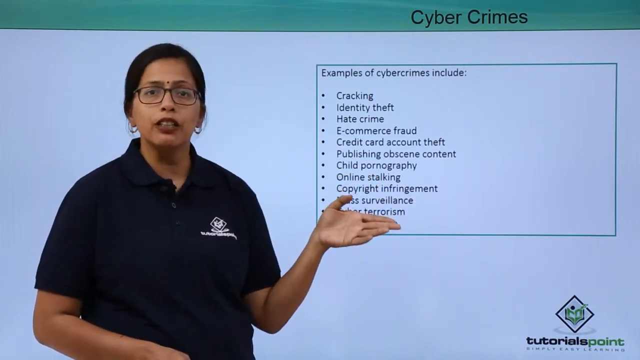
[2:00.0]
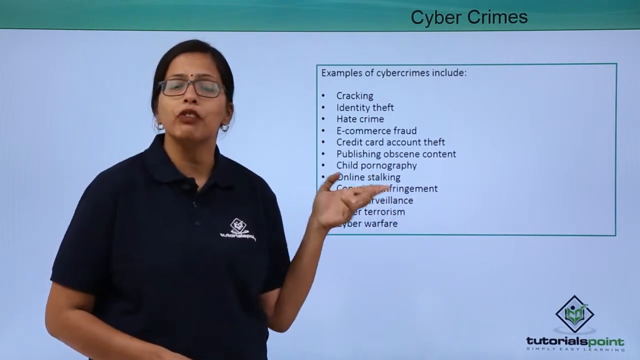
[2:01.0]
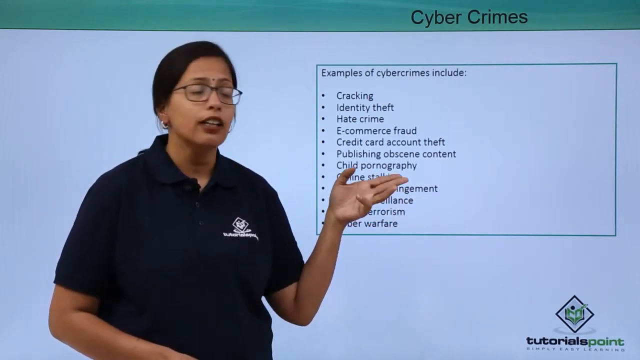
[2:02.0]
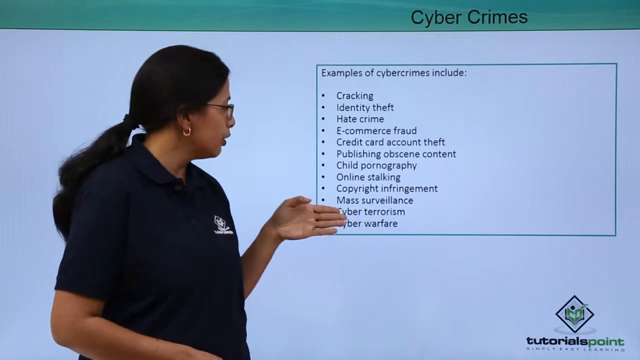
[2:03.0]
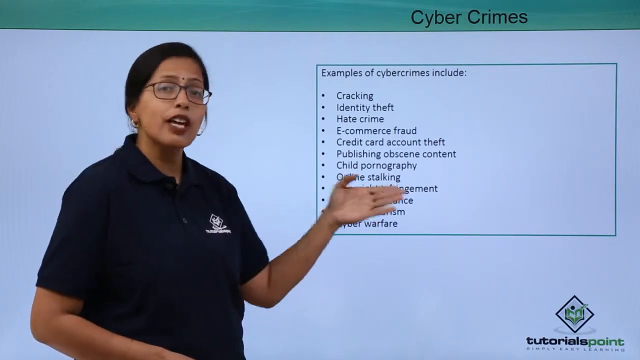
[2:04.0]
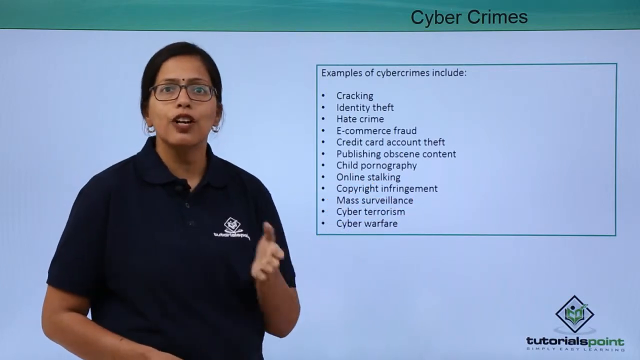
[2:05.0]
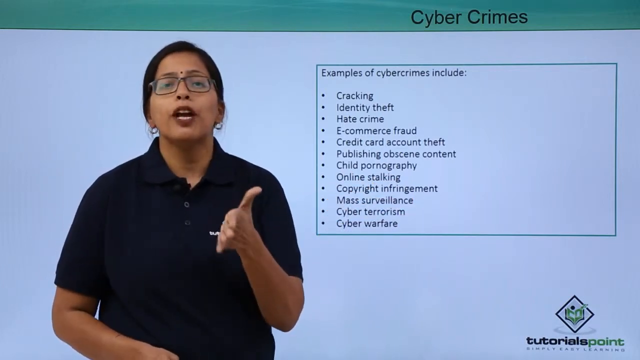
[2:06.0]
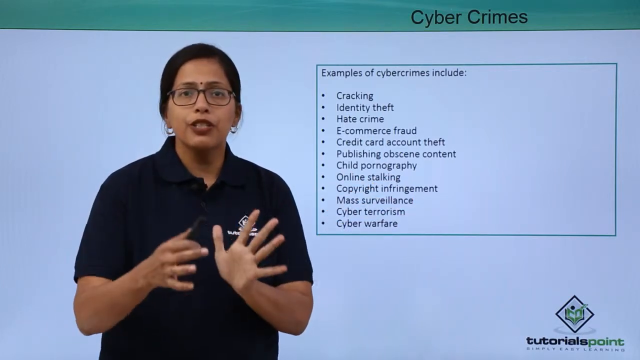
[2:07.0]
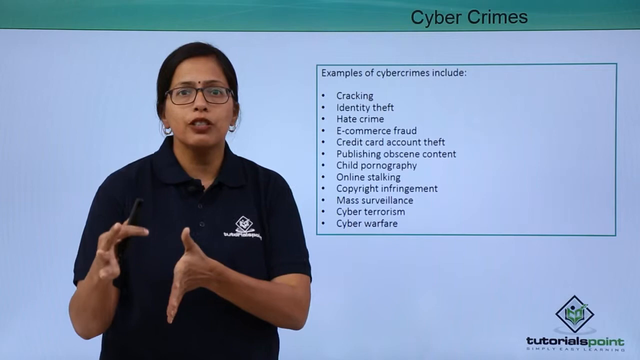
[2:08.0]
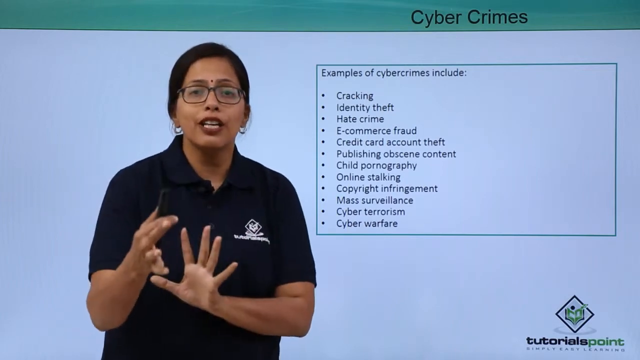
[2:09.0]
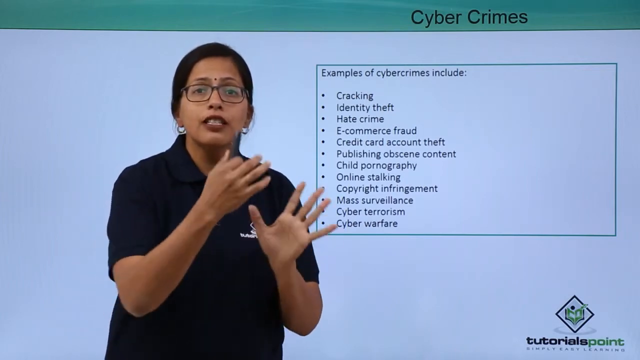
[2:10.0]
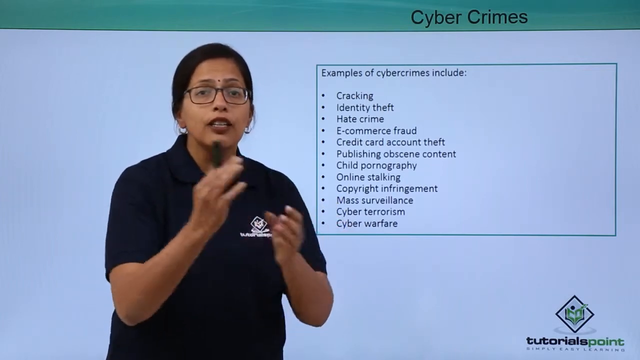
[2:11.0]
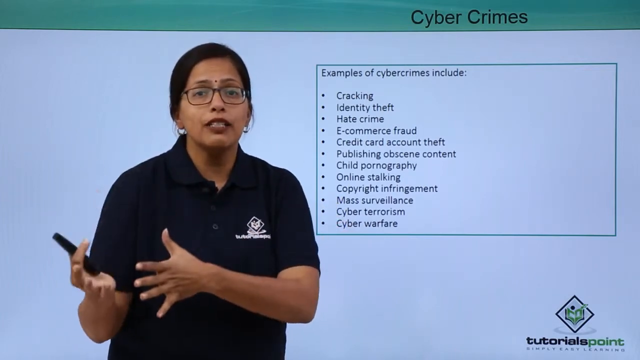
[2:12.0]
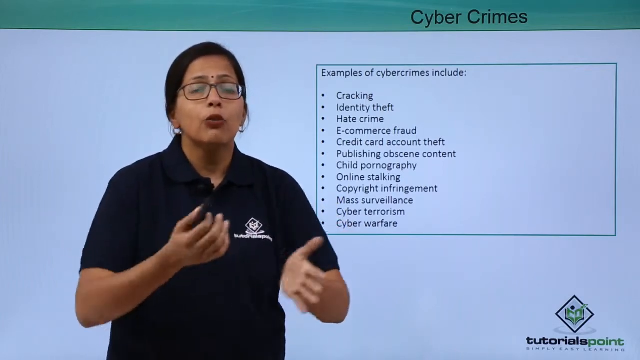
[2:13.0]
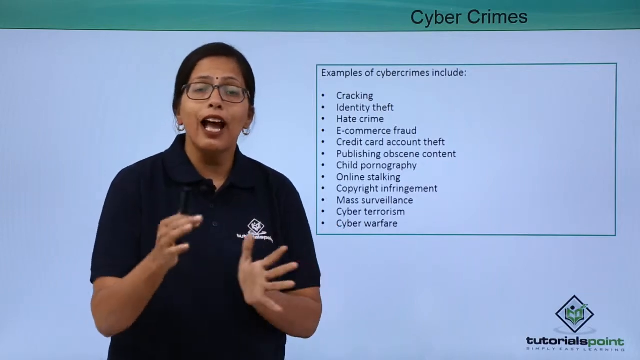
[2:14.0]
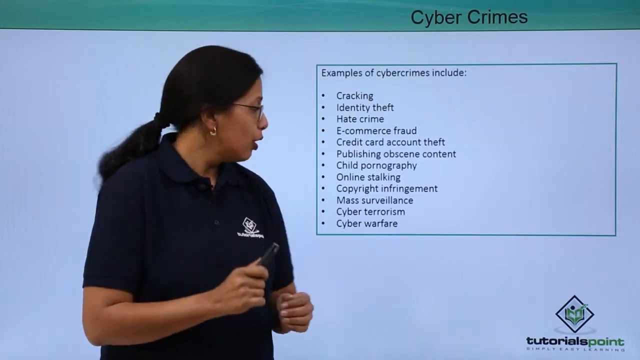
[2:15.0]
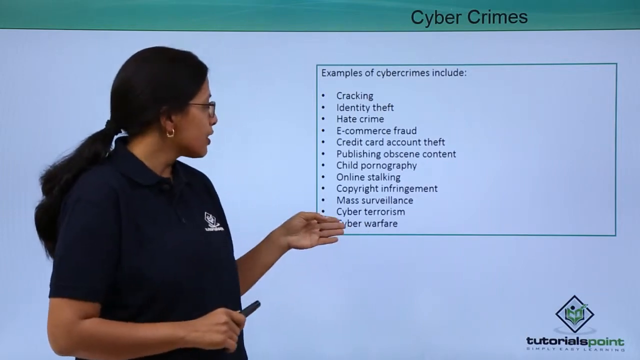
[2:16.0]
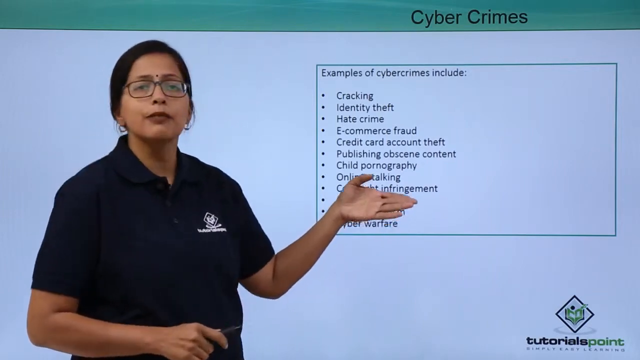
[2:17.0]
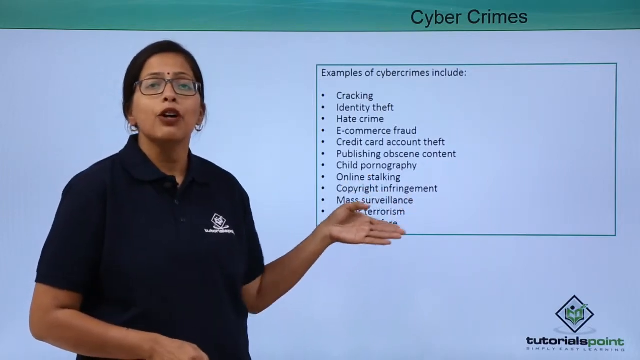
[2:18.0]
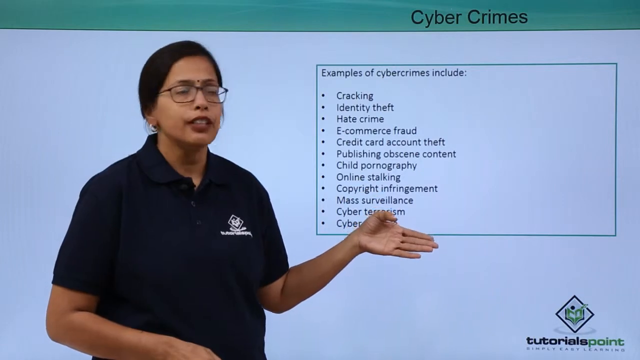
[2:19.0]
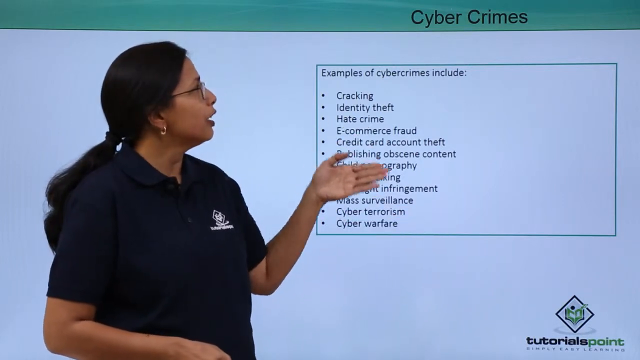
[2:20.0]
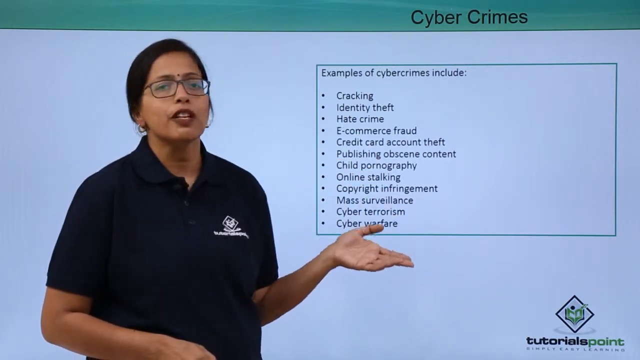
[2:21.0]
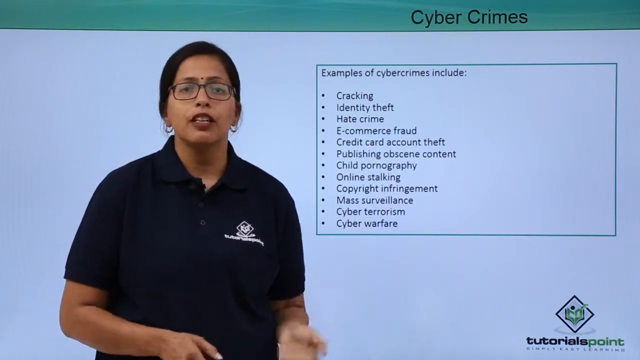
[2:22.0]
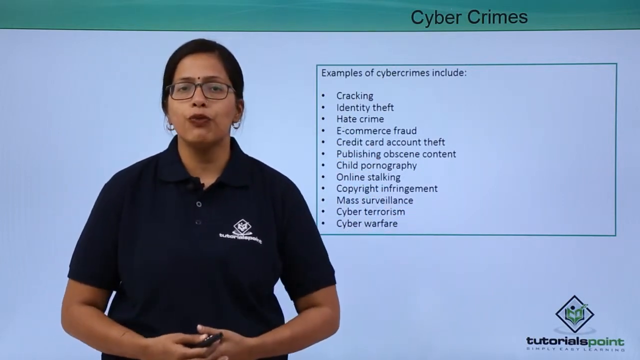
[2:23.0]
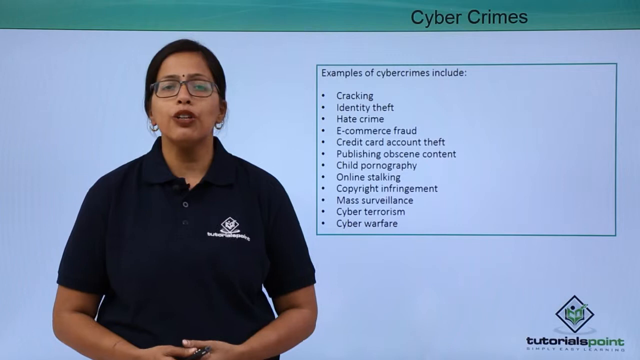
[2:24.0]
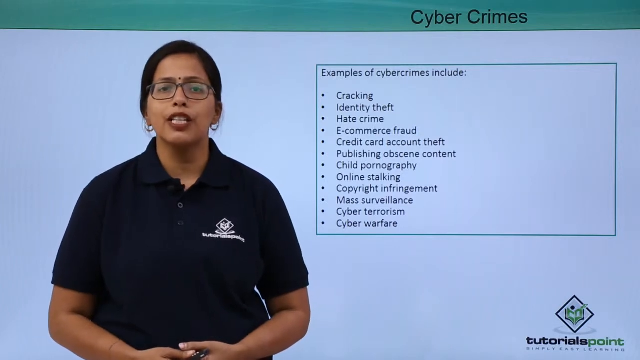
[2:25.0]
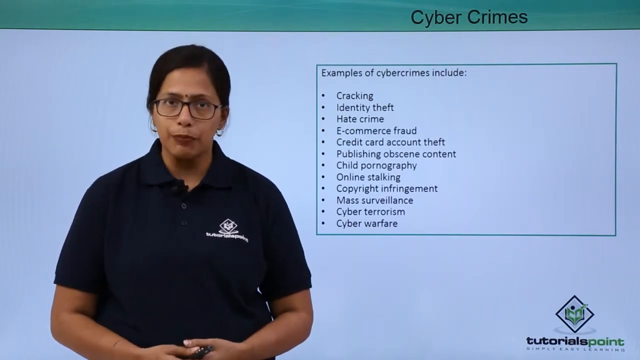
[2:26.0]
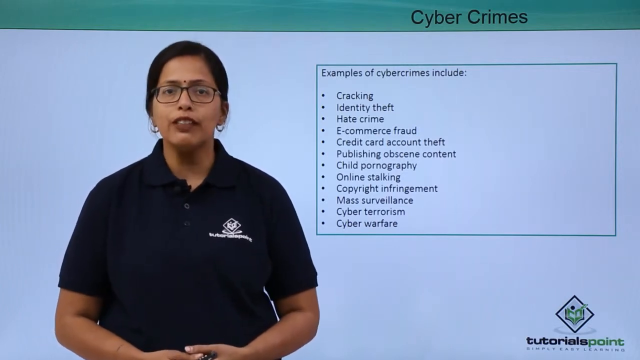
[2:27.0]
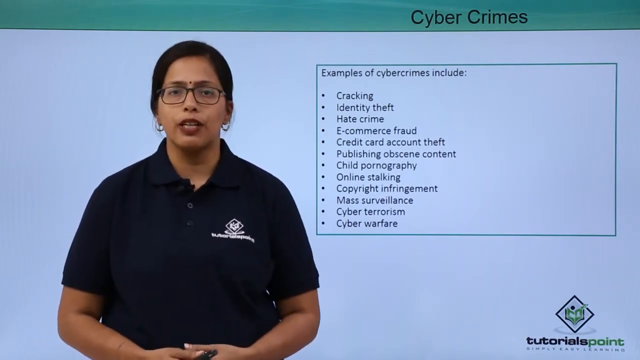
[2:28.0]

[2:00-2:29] The female lecturer is a middle-aged Indian lady with black hair and a dark complexion. She has a black dot in the middle of her eyebrows, wears glasses, burgundy lipstick and small hoop earrings, and wears a black t-shirt embroidered with "tutorials point" and "simply easy learning". She teaches about cyber crimes while holding a pencil.